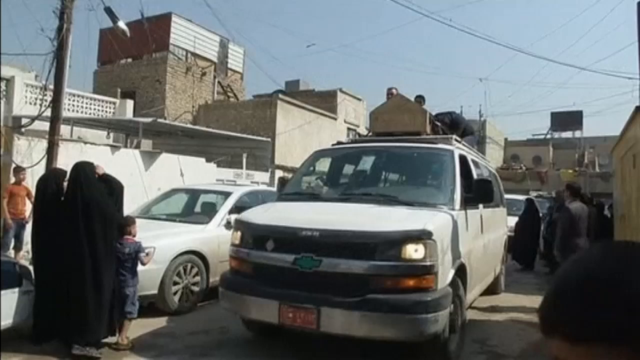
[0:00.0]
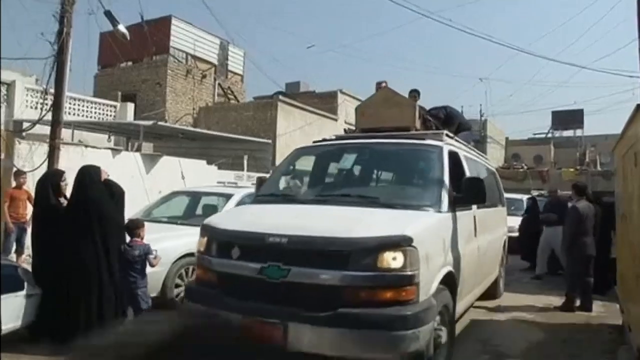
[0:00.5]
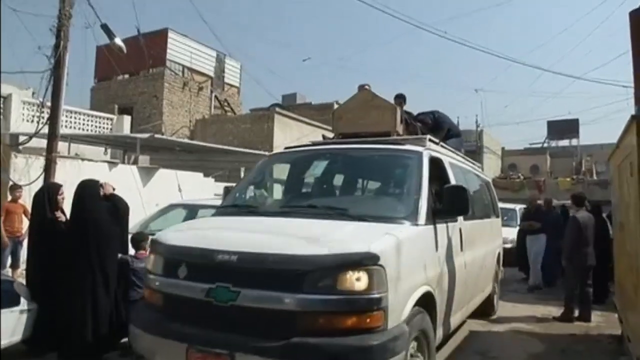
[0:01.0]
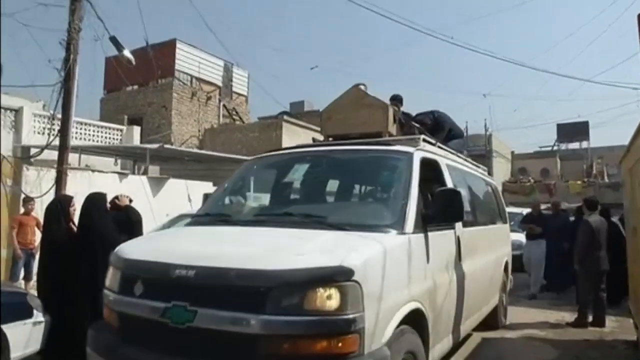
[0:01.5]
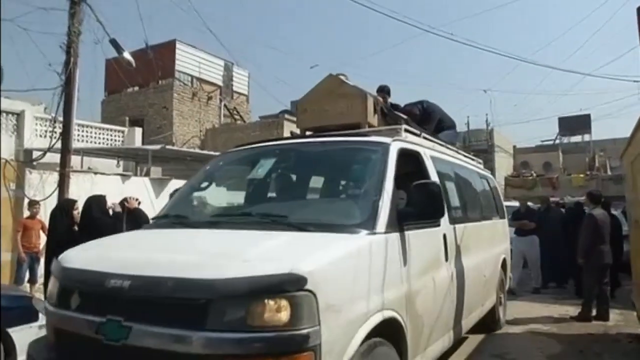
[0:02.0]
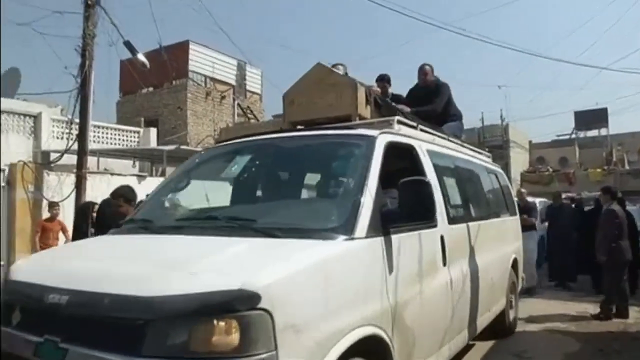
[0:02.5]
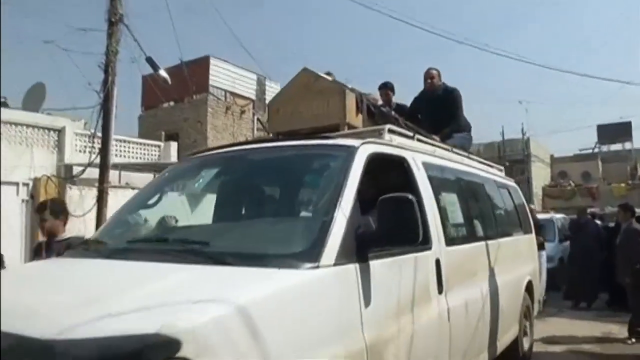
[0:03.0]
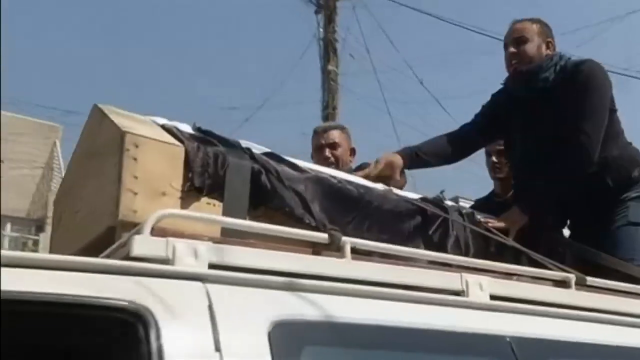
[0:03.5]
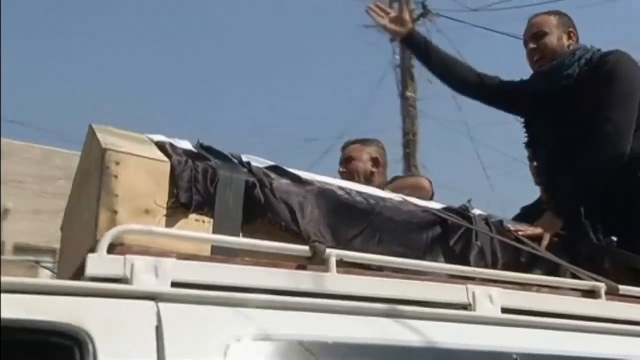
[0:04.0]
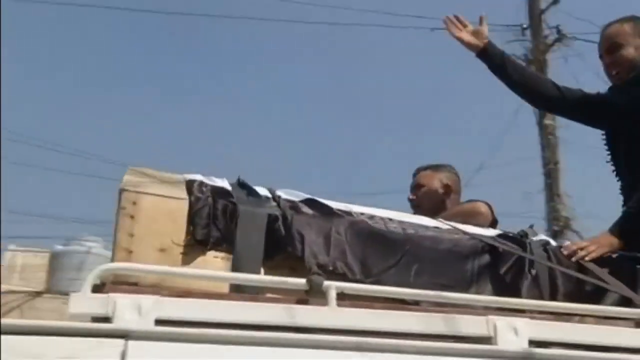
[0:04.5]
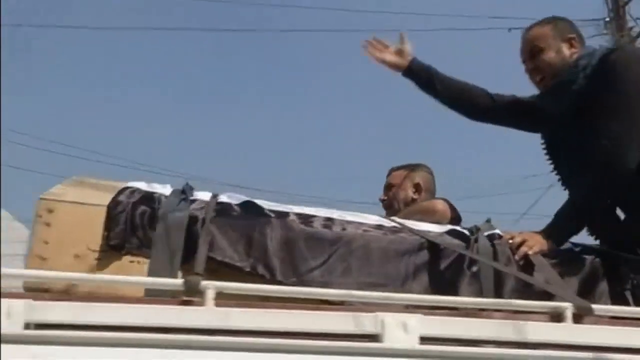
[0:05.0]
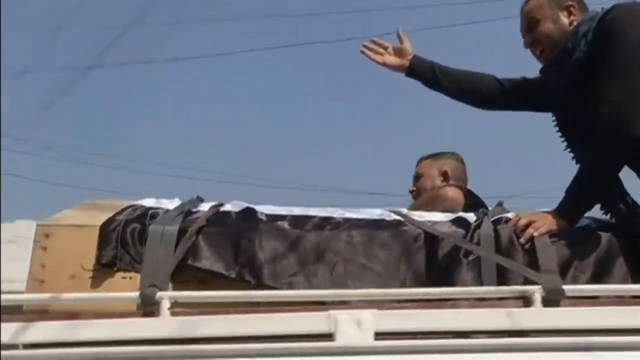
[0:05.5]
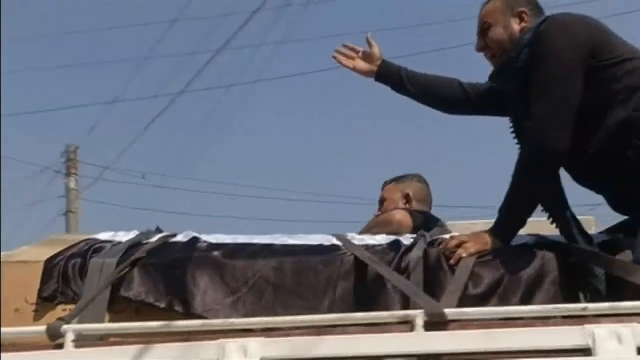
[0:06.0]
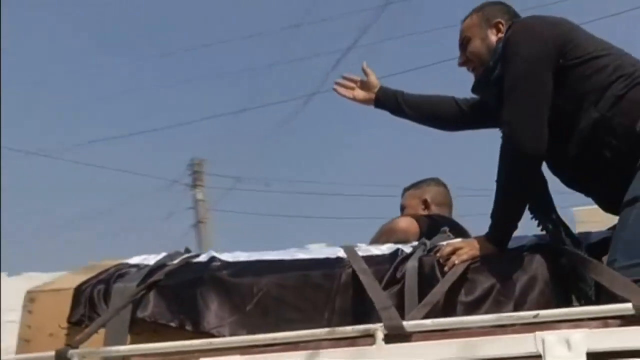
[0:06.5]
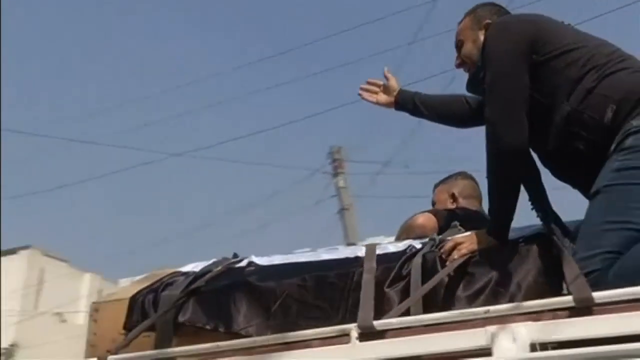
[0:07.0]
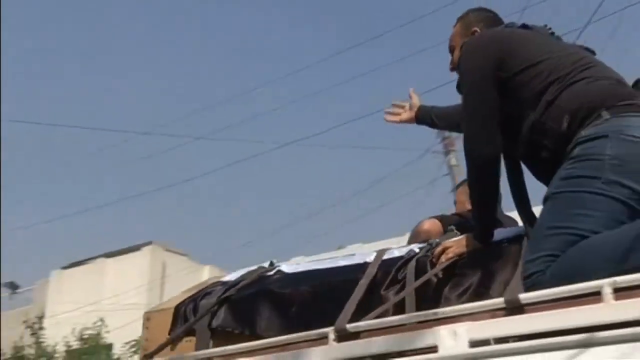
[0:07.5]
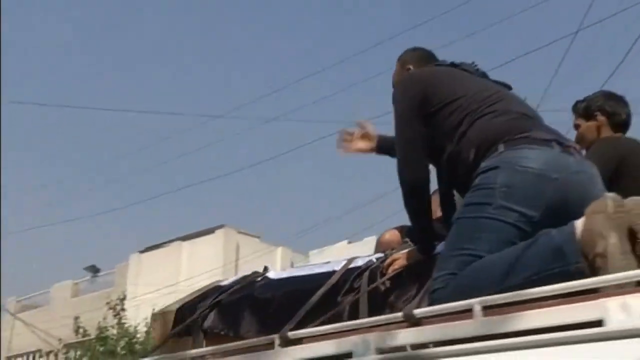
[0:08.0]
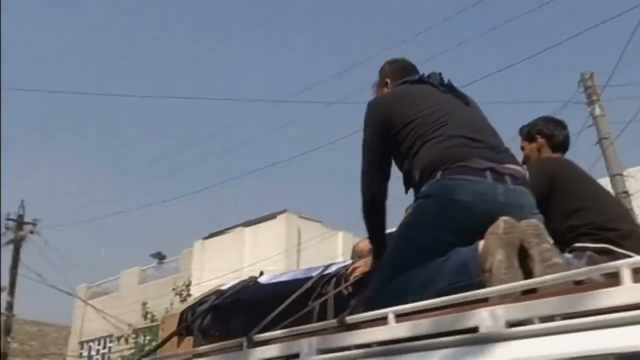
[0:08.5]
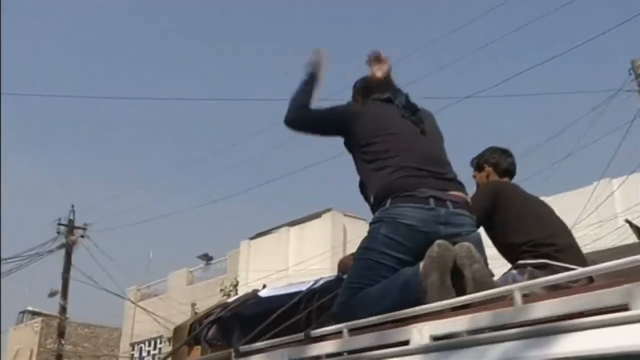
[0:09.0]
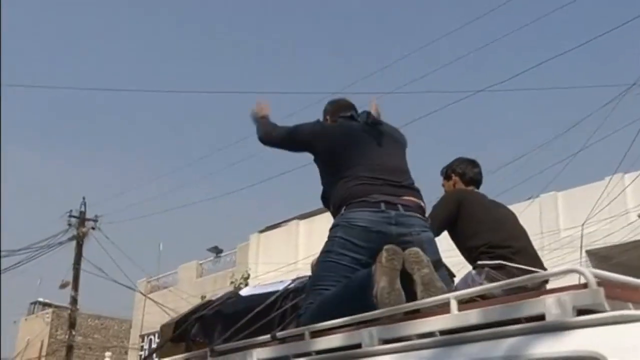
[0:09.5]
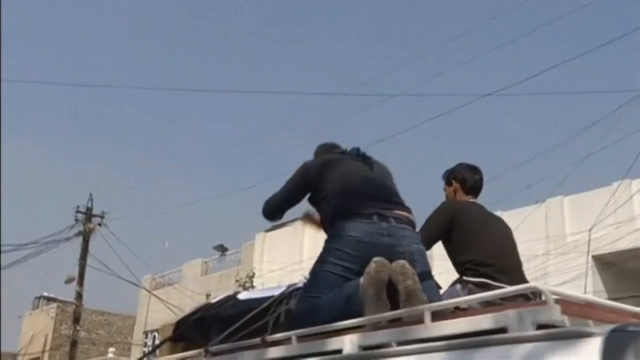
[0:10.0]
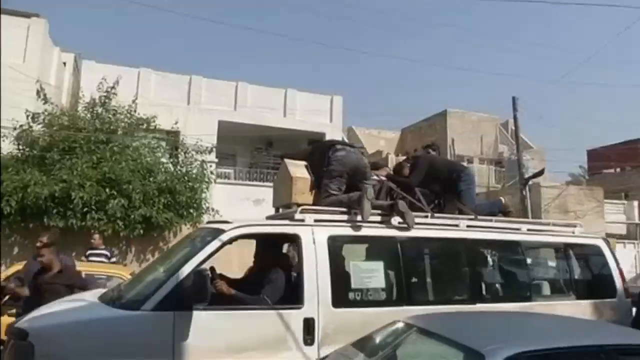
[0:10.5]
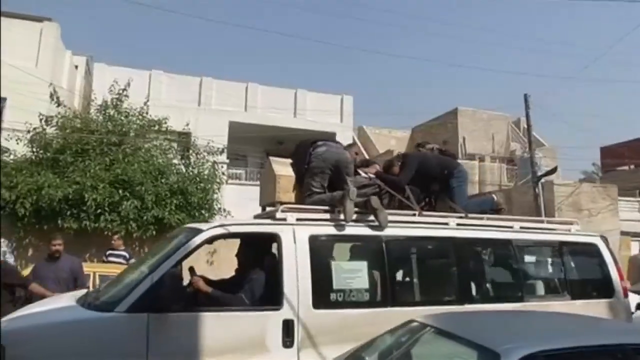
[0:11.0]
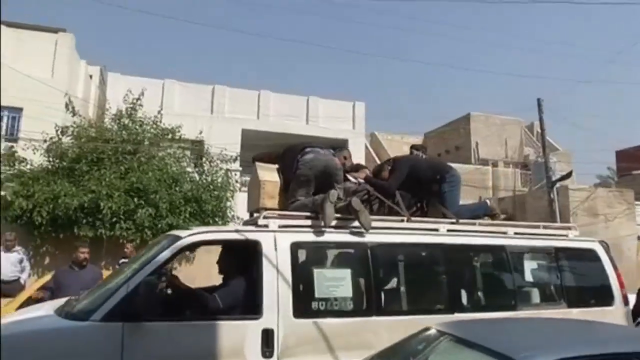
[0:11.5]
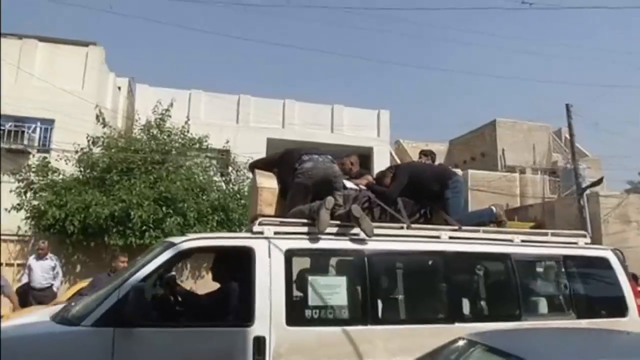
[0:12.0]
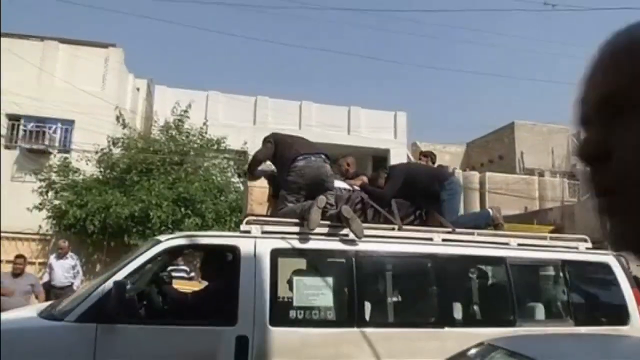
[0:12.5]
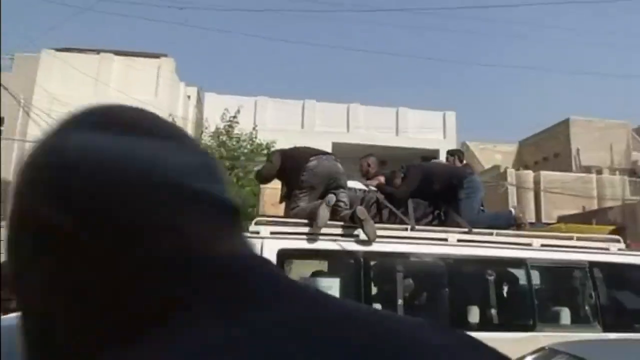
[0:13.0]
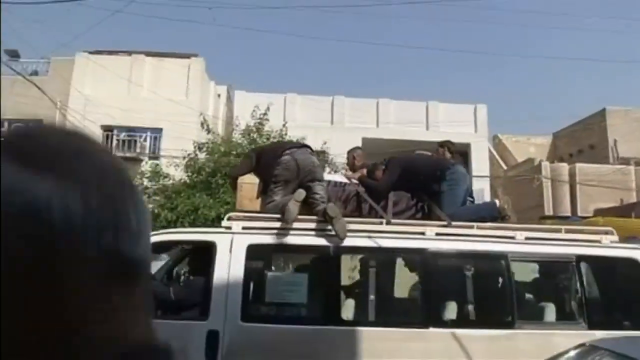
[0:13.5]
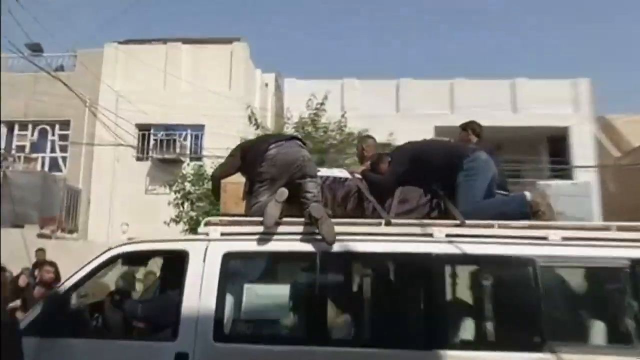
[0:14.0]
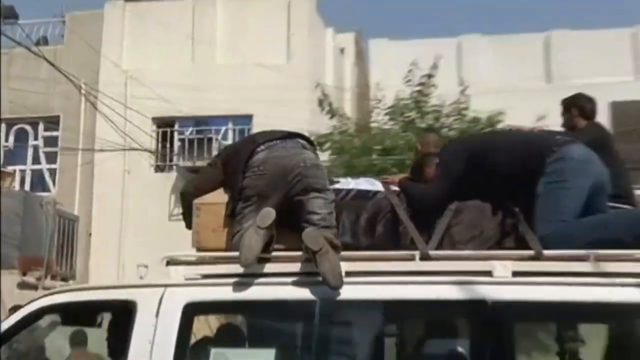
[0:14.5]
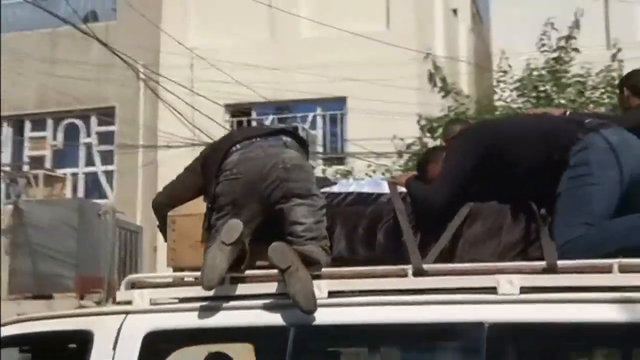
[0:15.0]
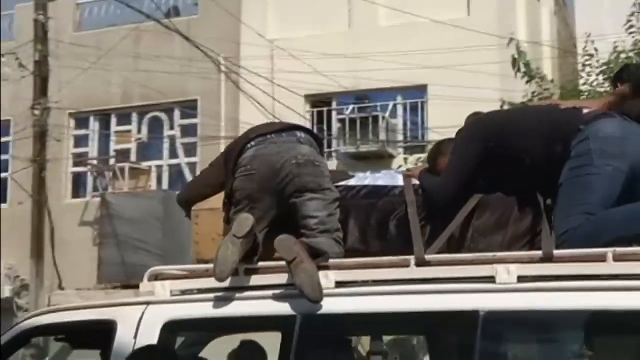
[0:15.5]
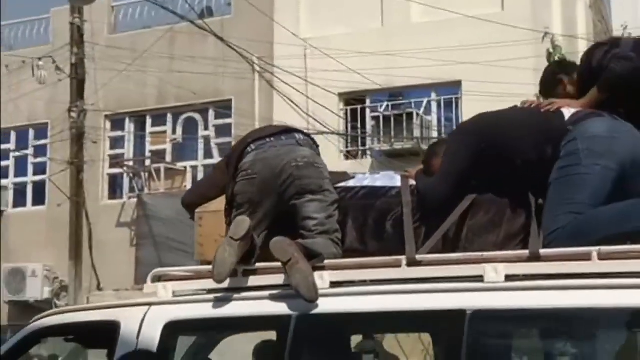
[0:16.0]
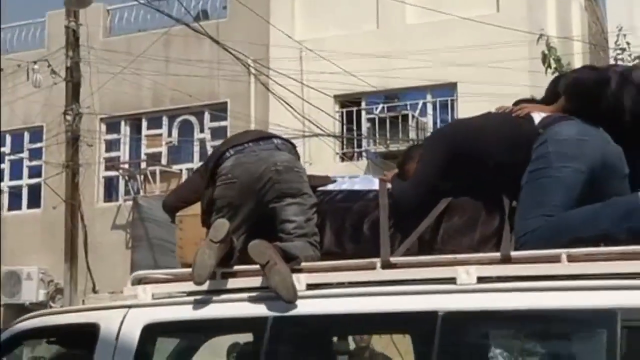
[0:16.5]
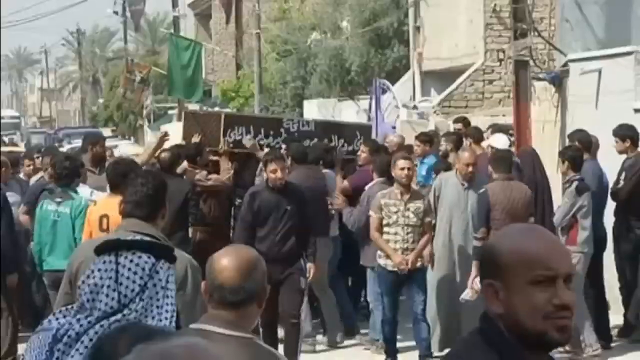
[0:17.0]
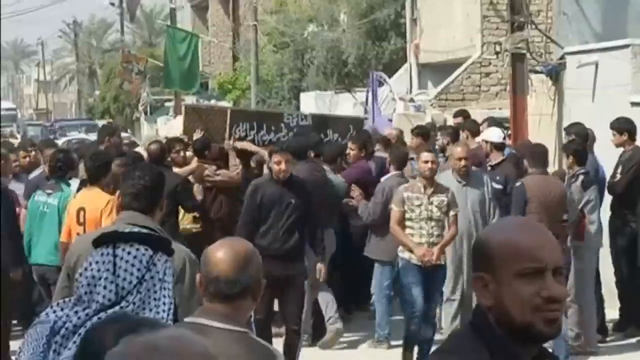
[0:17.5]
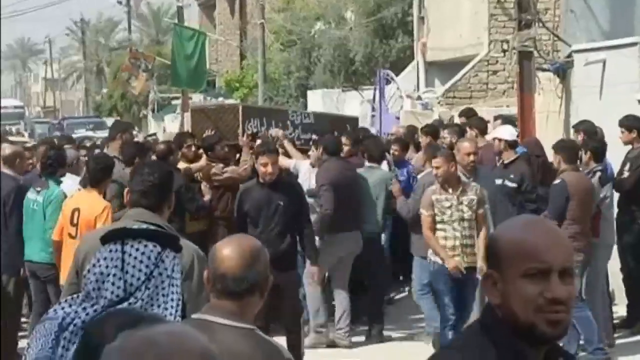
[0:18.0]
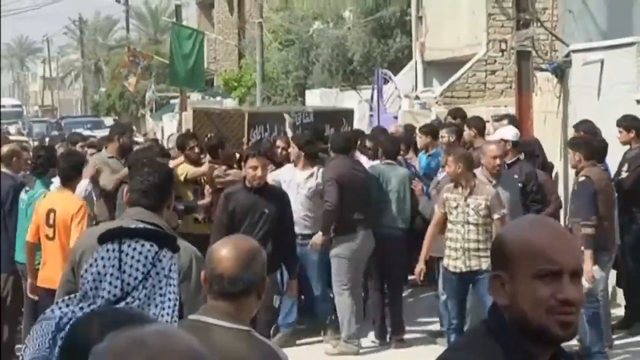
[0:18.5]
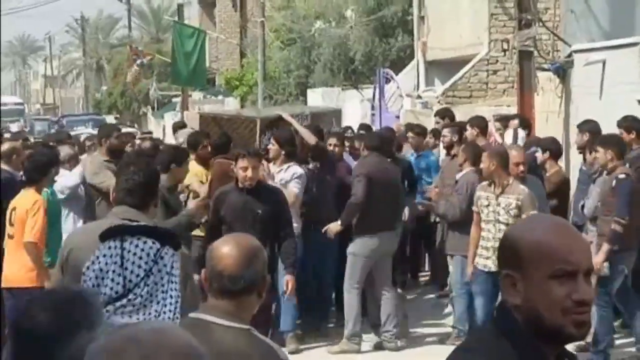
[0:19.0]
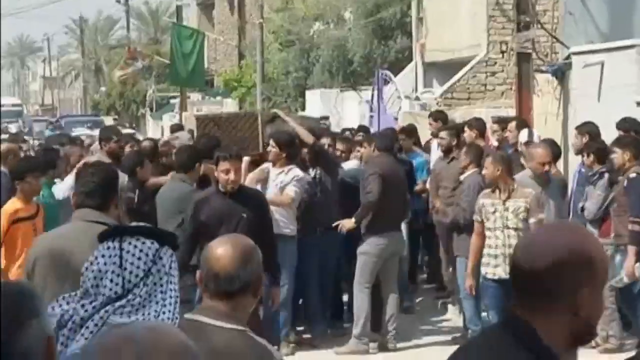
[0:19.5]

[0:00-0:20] A white van moves through a city with men on top of it, transporting a casket. As the van moves to the left, the men on top lean downward into the casket; they appear to be praying and appear to be very sad about whoever is in the casket. A ground view then shows a lot of people picking up the casket and moving it through a crowd. The area appears to be somewhere in the Middle East. The casket is black with some white Arab writing on it.